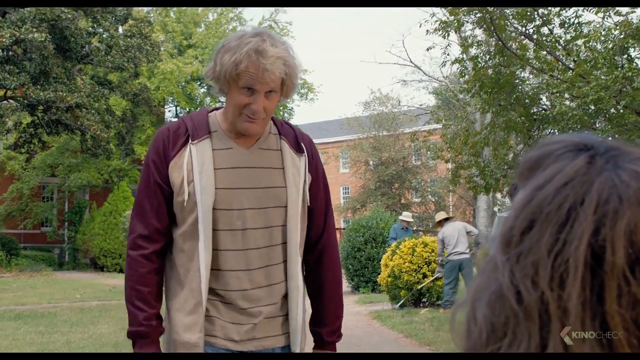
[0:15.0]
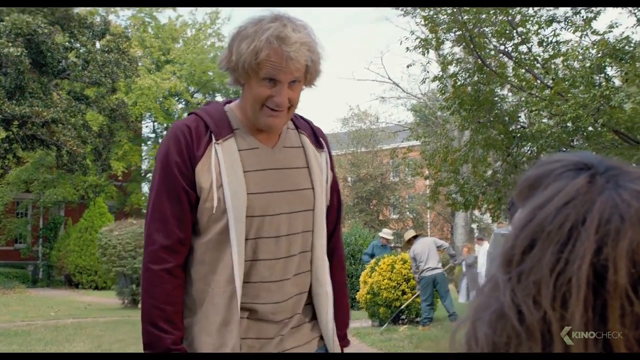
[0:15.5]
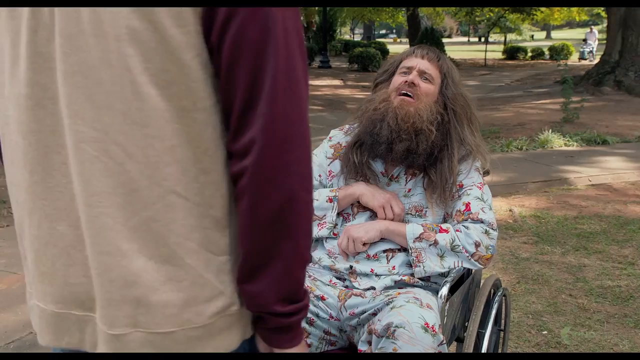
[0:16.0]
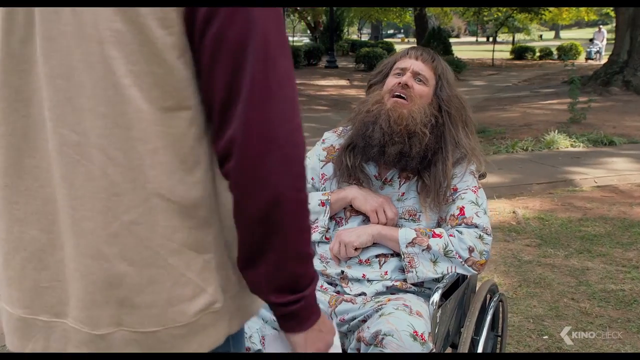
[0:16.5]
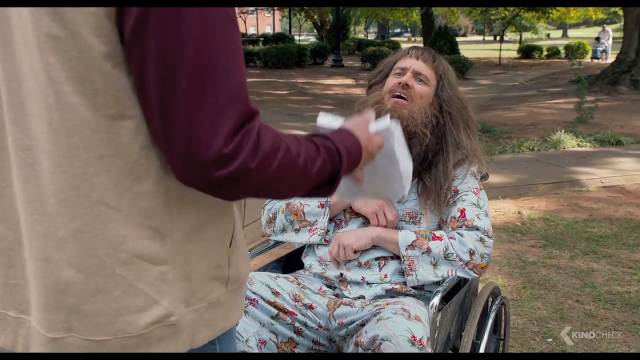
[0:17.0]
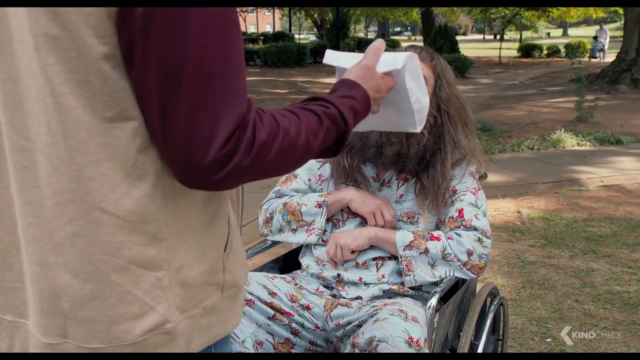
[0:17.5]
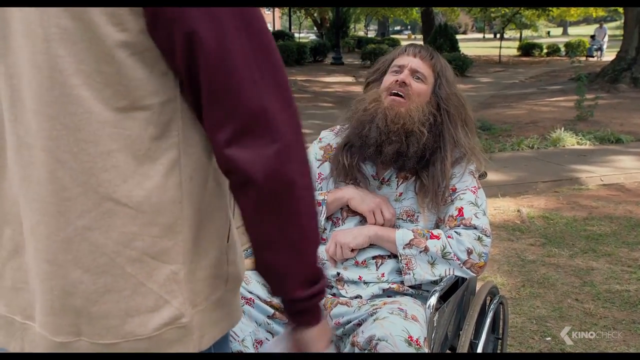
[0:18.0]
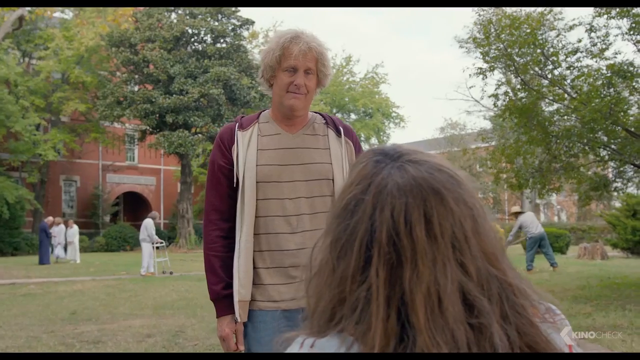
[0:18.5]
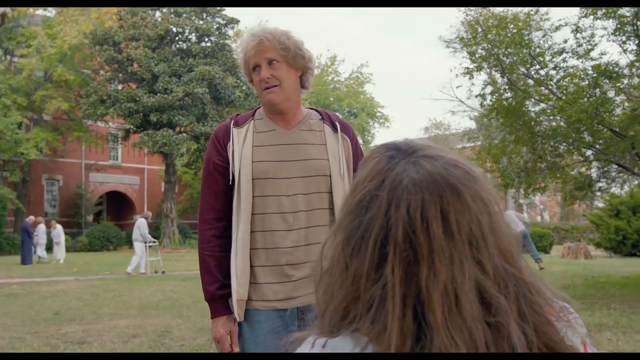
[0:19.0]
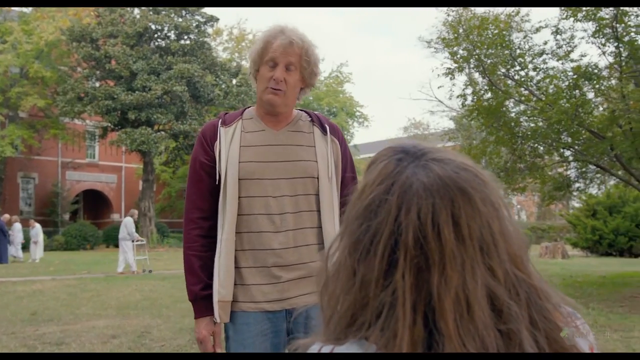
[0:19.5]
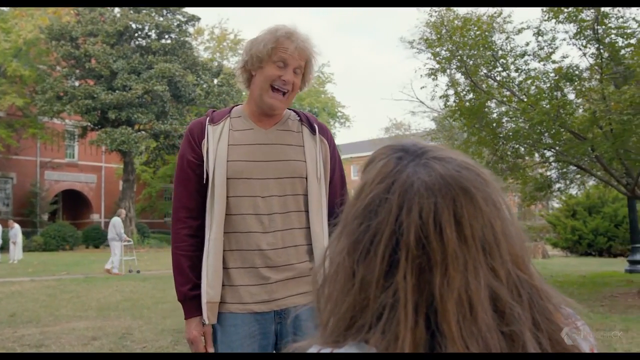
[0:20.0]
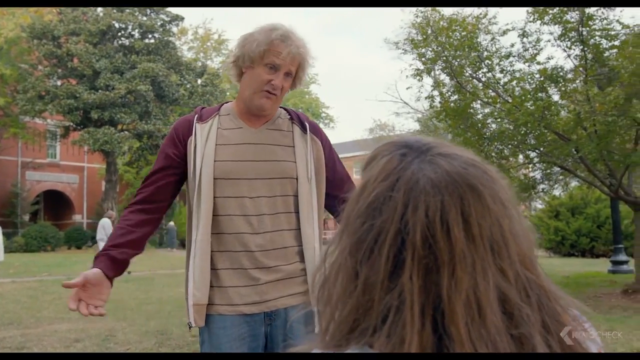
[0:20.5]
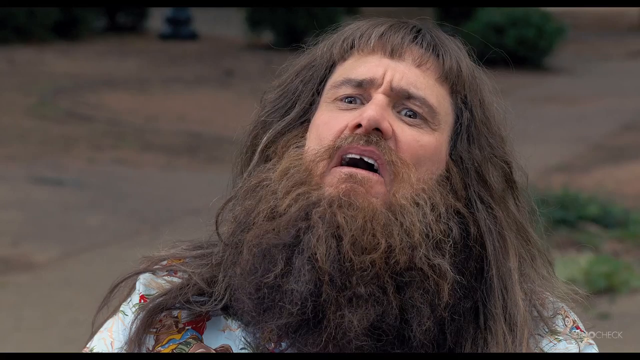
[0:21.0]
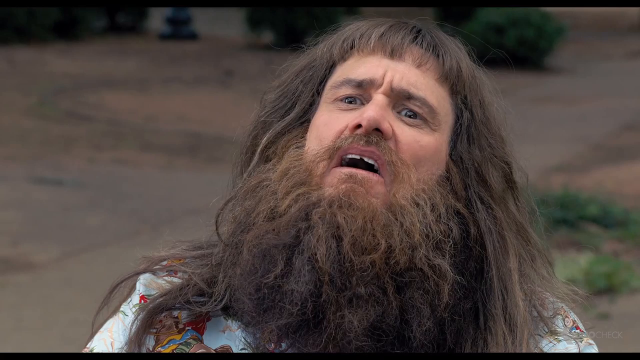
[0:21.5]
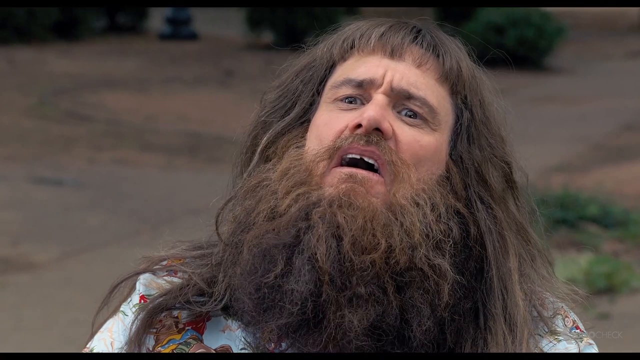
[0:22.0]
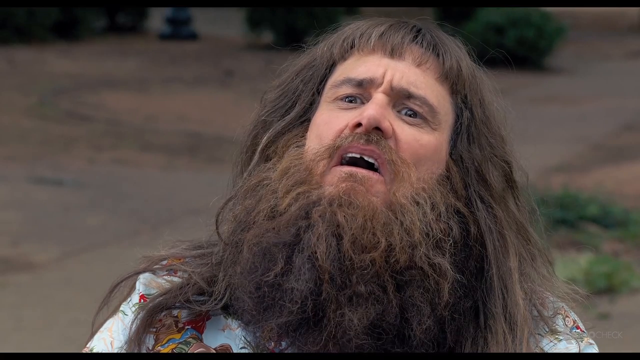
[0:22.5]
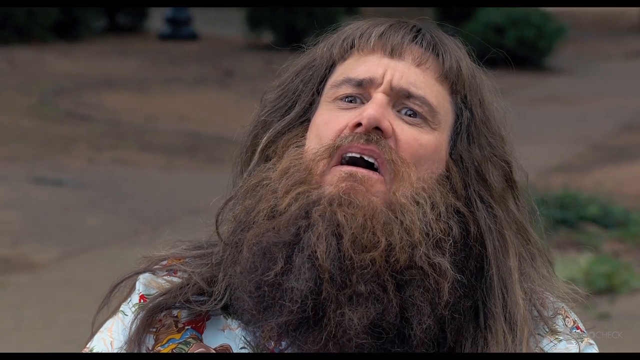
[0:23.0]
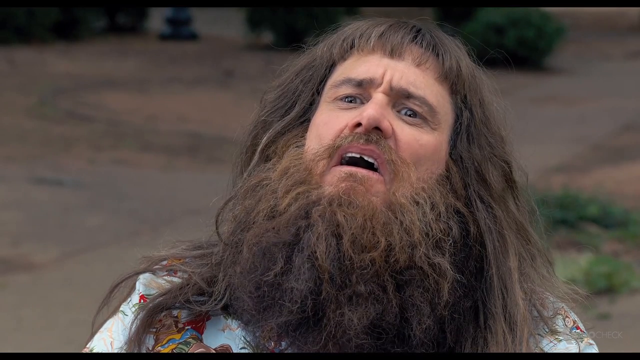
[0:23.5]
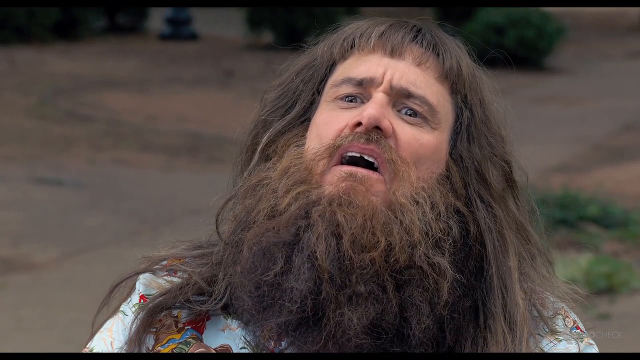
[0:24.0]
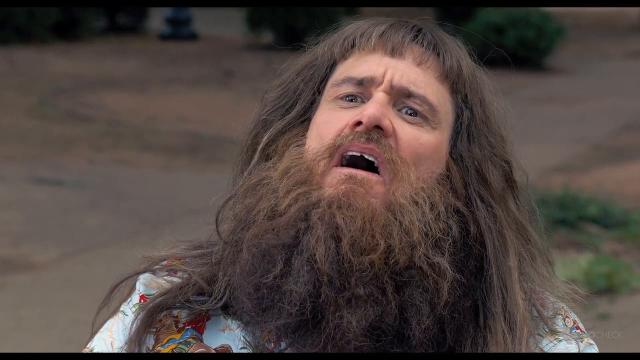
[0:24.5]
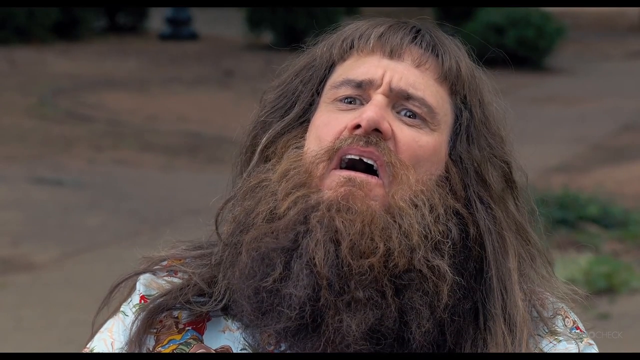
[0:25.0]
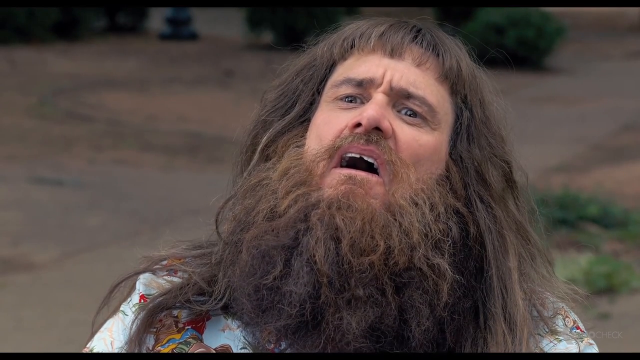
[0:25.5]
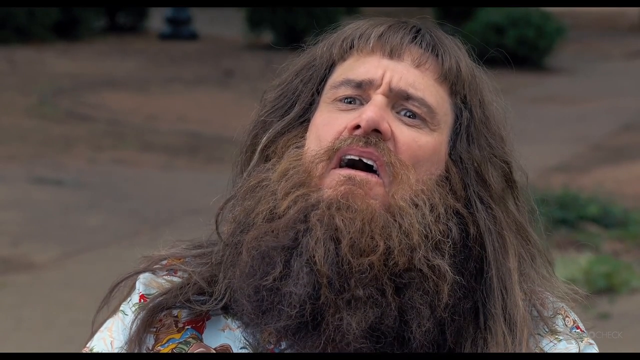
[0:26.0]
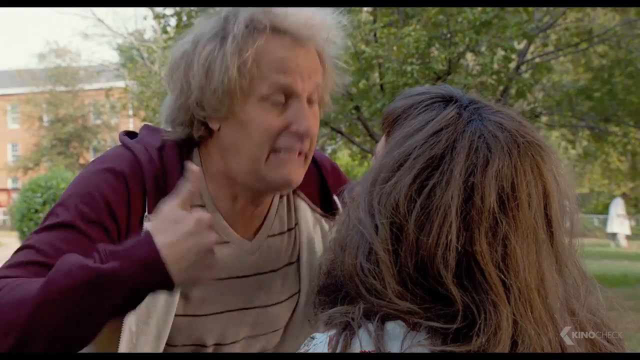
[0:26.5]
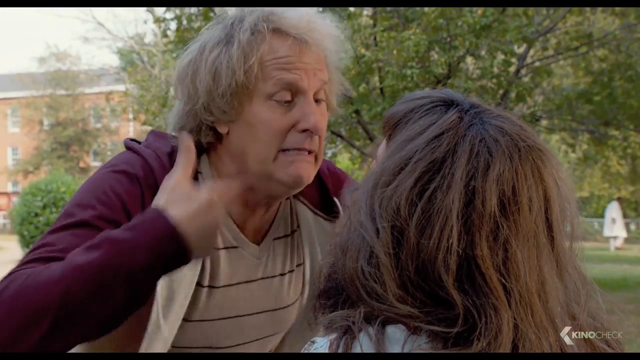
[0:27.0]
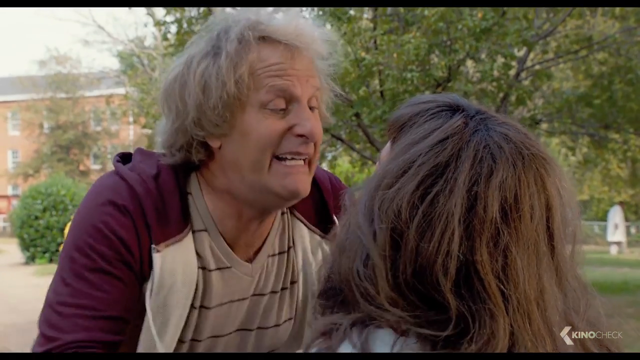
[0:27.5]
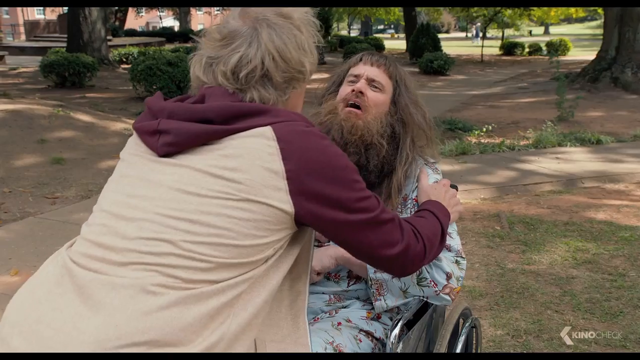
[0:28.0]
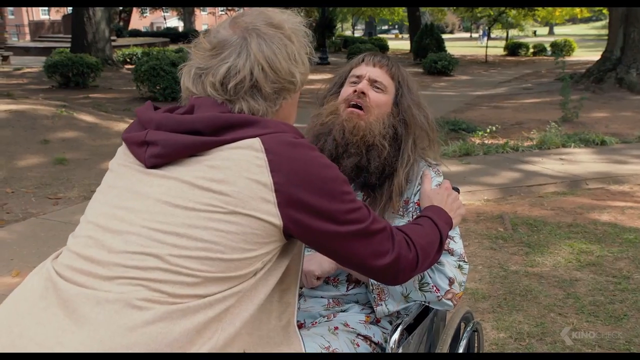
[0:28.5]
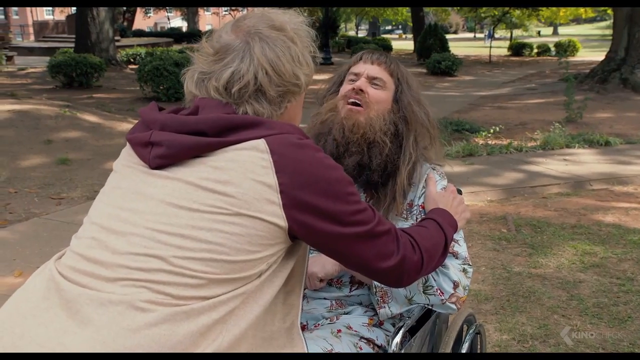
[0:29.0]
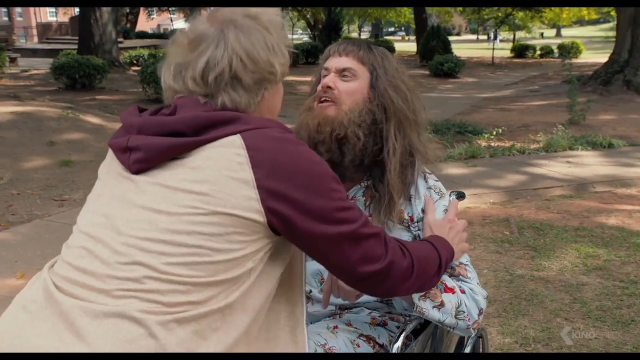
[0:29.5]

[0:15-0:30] The older man and the other man are on a bench, talking. The view cuts to the other man: Jim Carrey with a giant beard and long hair, in pajamas, sitting in a wheelchair with his arms crossed, apparently someone who is disabled. The older man takes up some sort of bag, which looks like maybe a bag of lunch, and says something. The bearded man has a very disturbed look on his face, his head kind of tilted backwards and his mouth open, though he does not seem to be talking. The older man then hurriedly seems to fan air around him and grasps him, and the man in the wheelchair starts screaming, his mouth very wide open, very expressive.